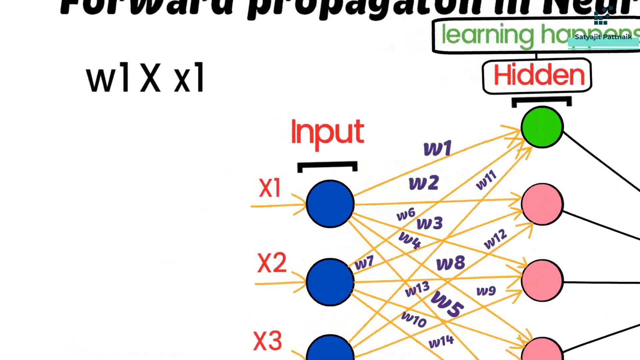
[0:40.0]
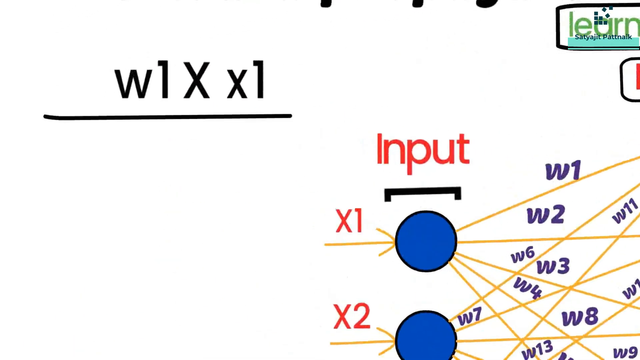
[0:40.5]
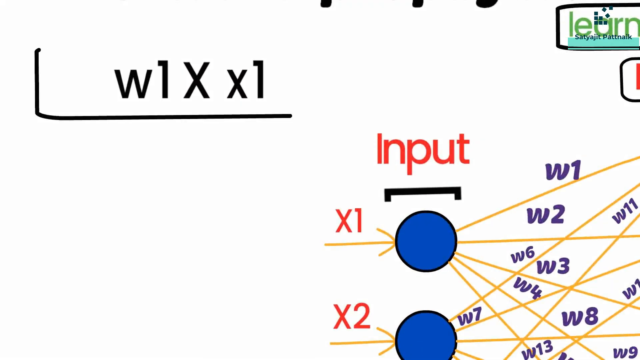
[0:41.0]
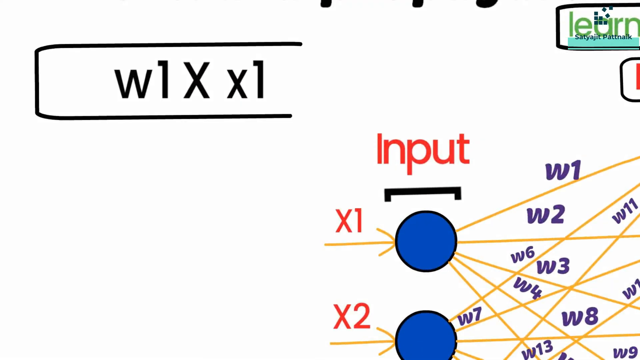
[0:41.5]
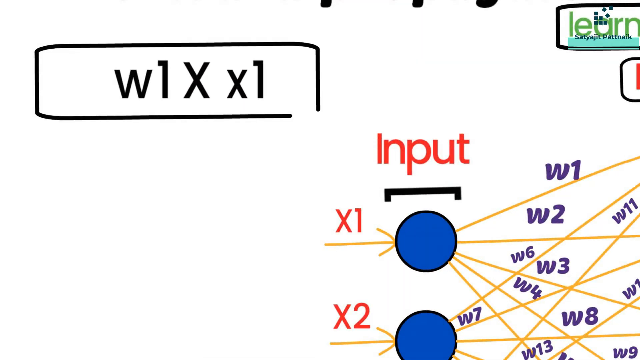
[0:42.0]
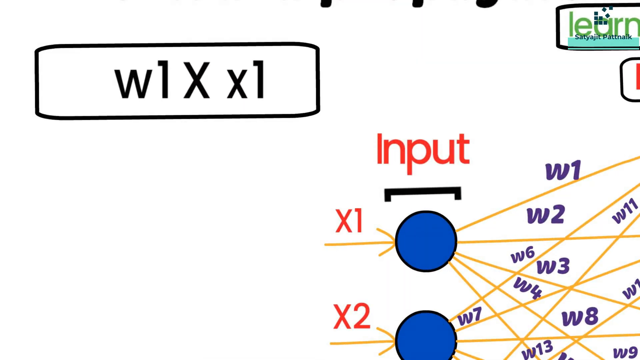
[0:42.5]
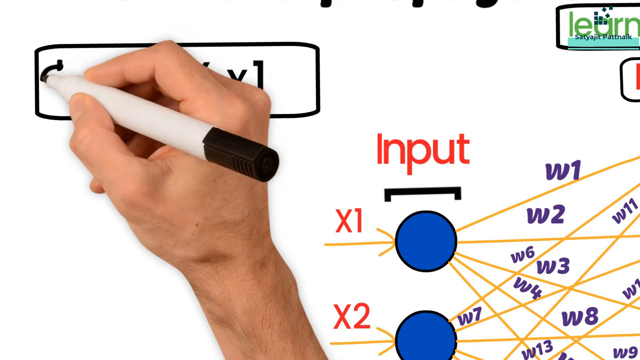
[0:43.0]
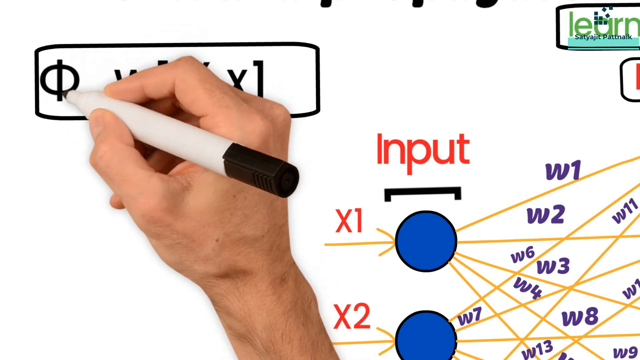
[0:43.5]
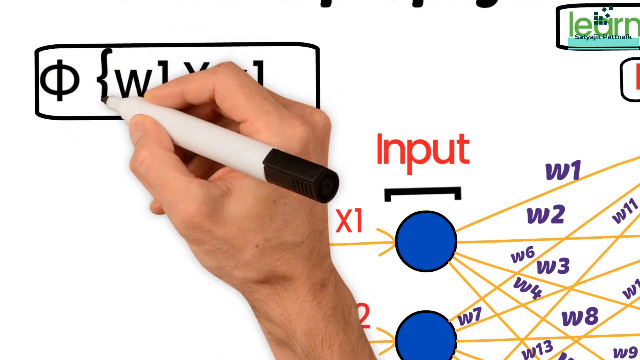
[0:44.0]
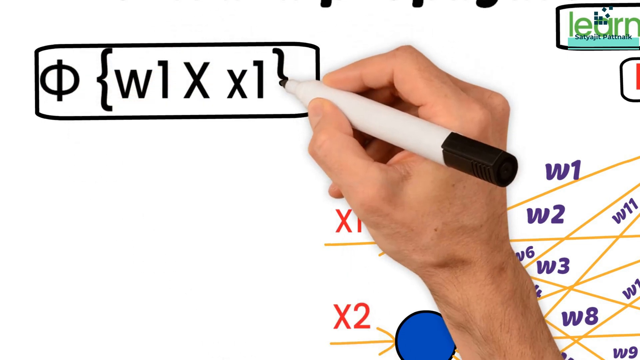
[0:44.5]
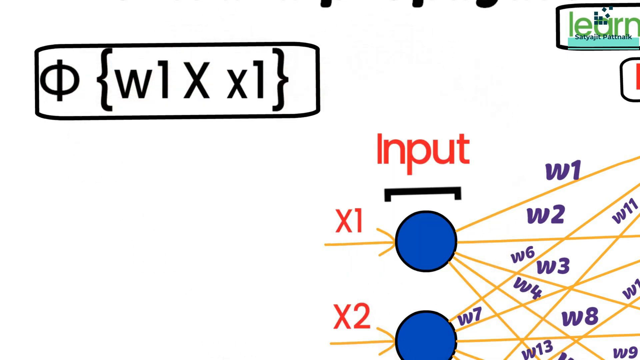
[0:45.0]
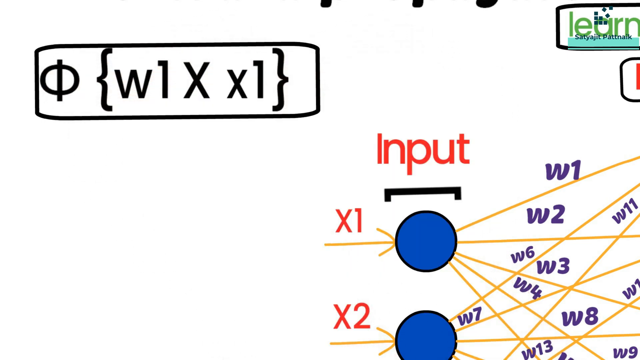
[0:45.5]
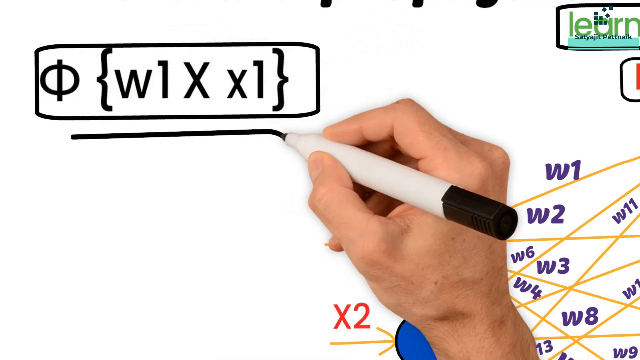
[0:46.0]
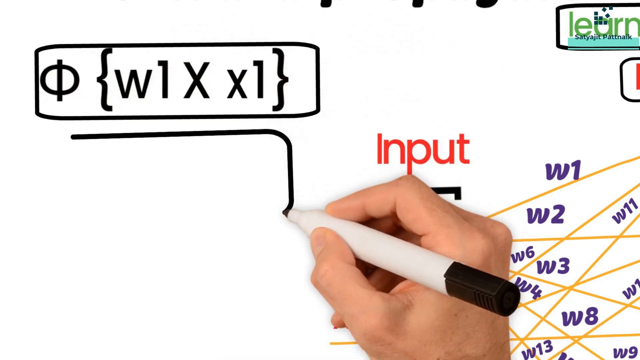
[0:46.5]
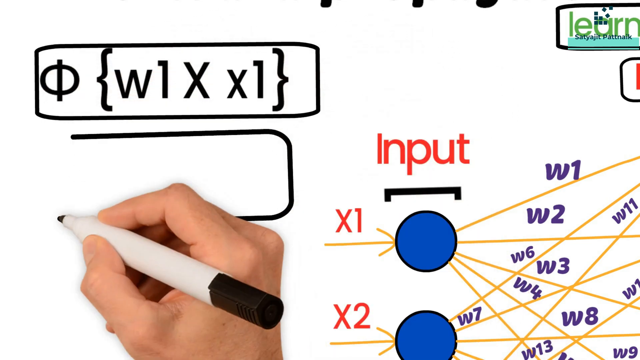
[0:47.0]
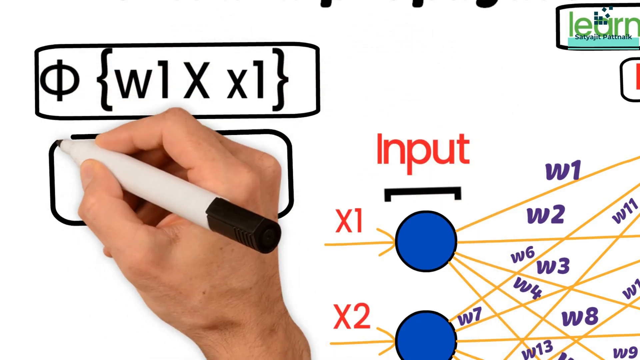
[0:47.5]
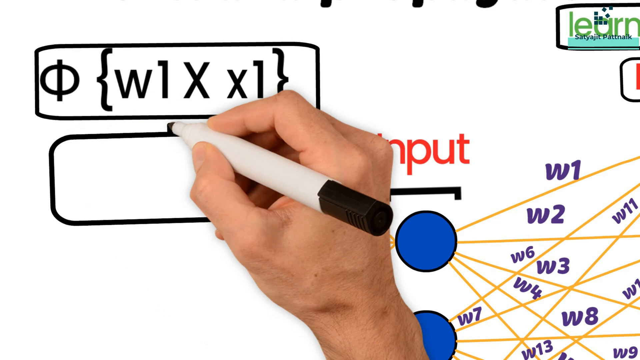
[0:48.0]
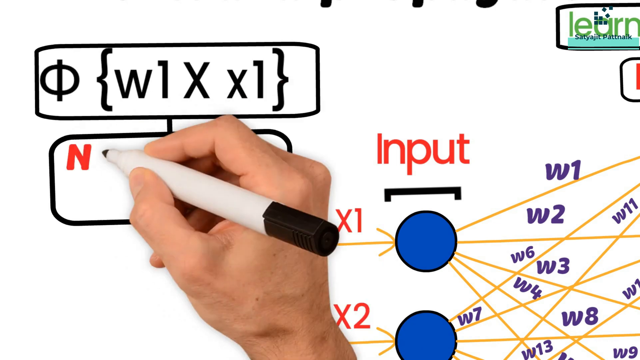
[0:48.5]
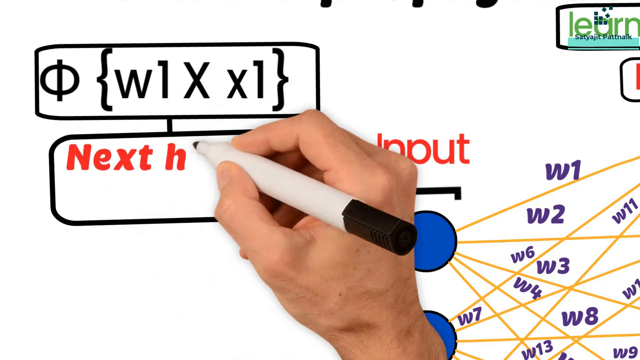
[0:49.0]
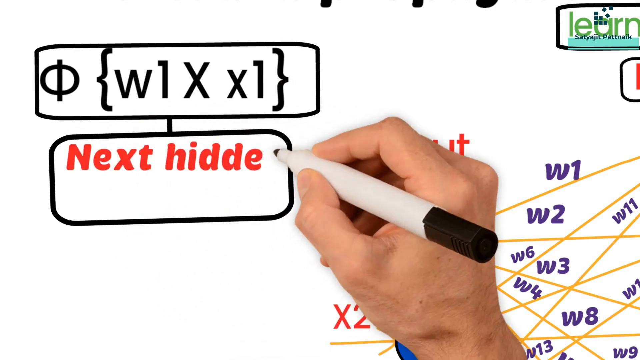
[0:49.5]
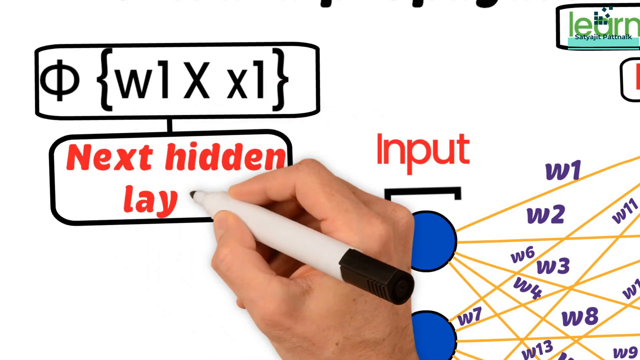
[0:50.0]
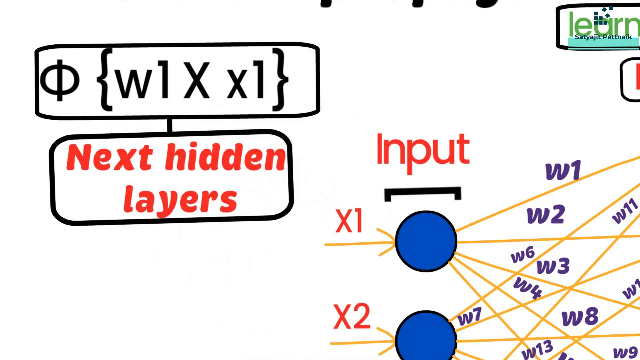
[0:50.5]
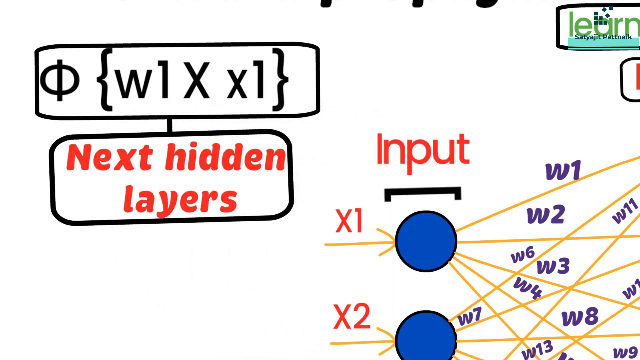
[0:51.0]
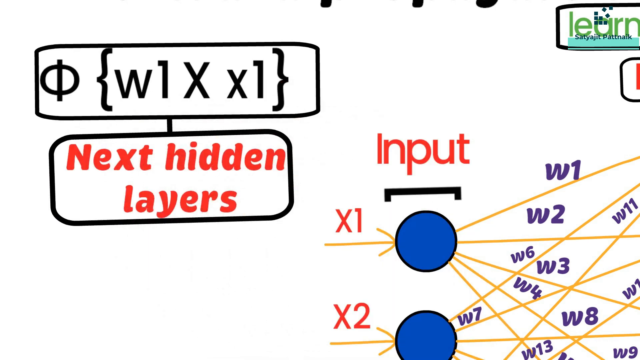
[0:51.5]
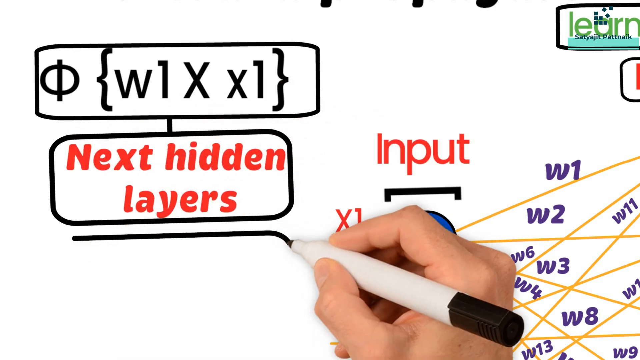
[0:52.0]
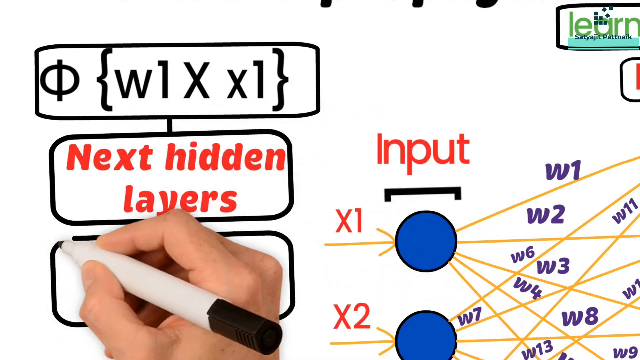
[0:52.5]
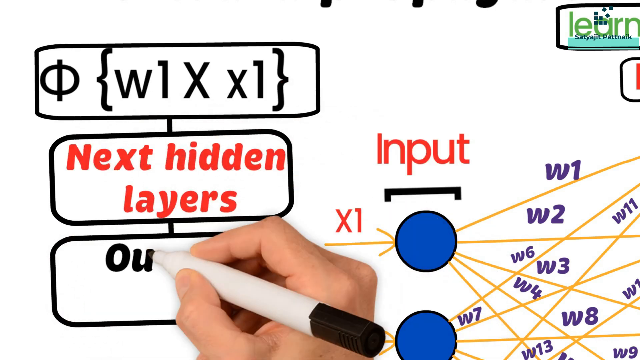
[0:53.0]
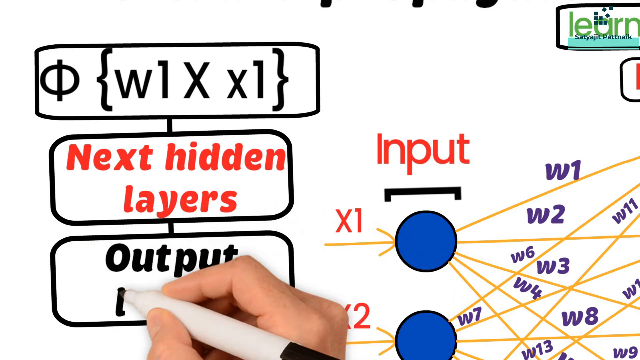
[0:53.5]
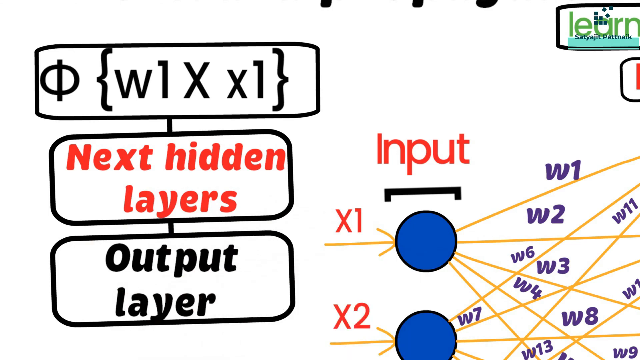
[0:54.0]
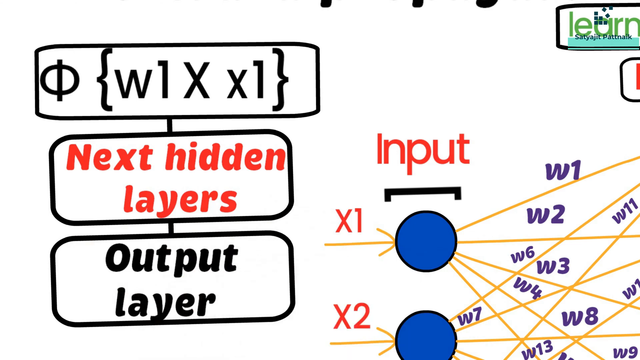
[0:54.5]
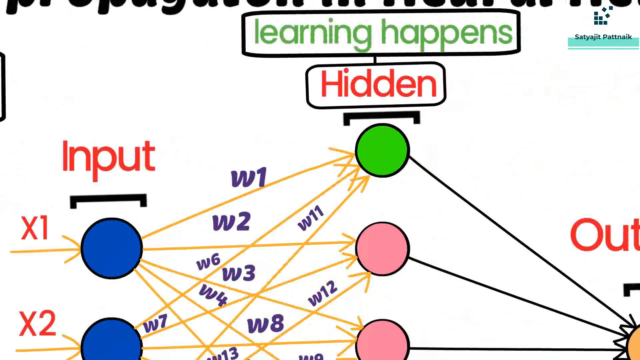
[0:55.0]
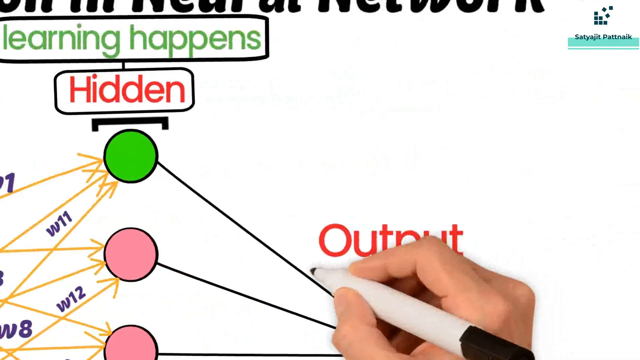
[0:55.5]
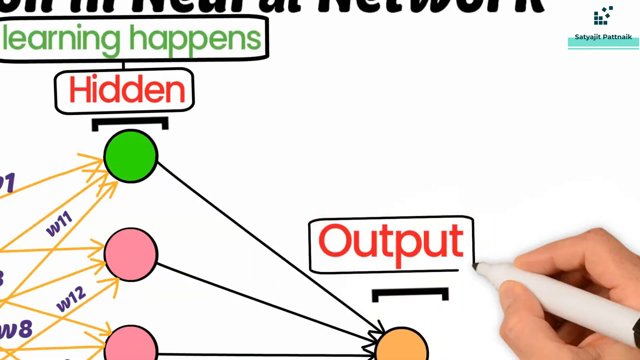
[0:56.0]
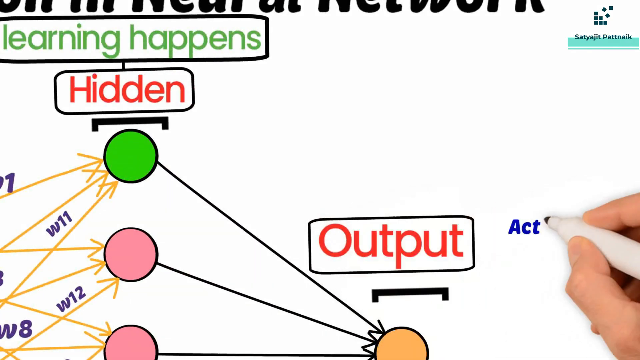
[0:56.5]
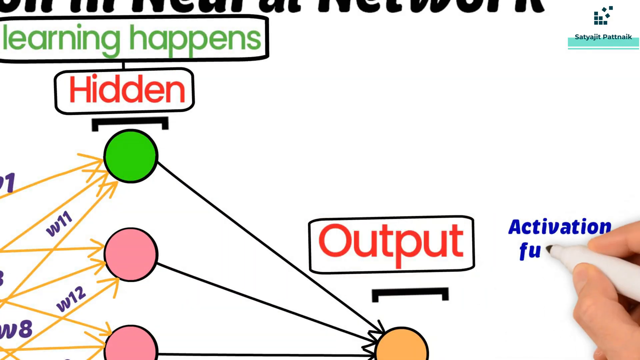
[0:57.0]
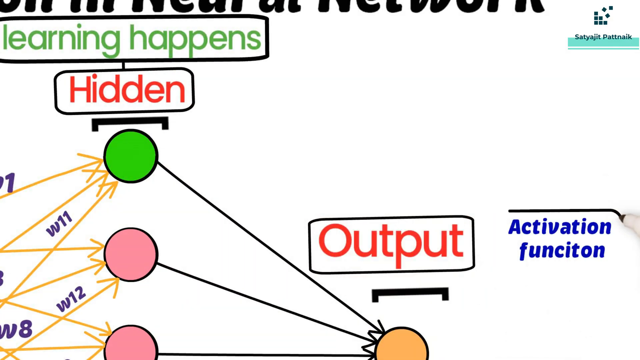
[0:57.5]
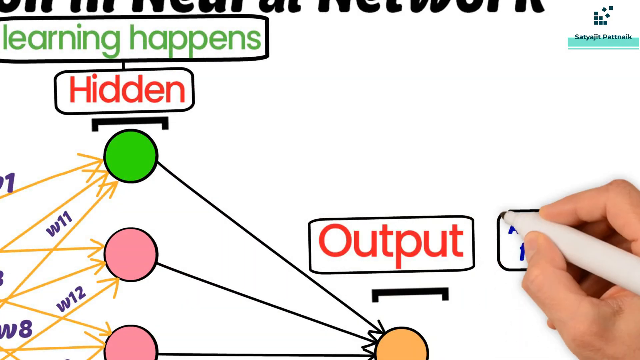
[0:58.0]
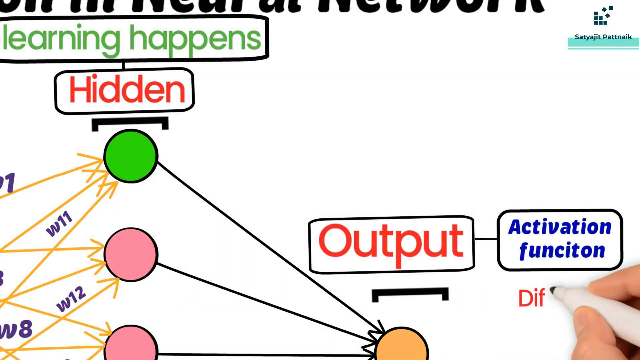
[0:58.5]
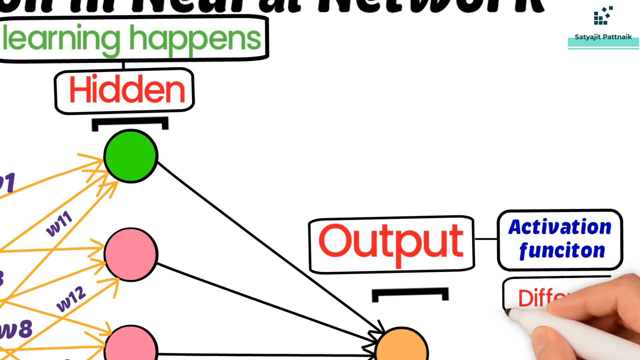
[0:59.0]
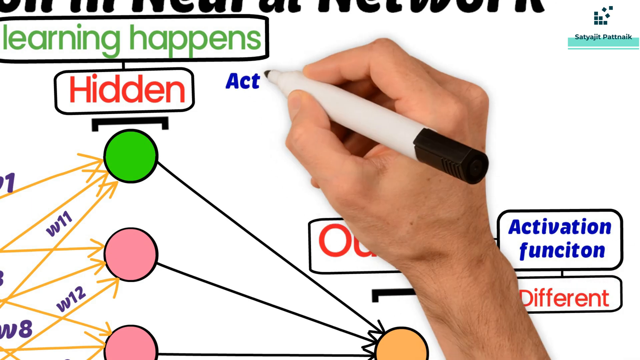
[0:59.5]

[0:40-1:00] Forward propagation is introduced, and the arrows are labeled with what they represent. Xs are numbered and given names. Headings such as layers and output layers are now written, and more information is added just below W1, X, X1.